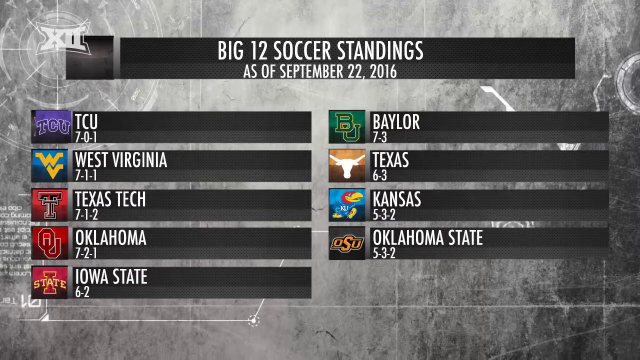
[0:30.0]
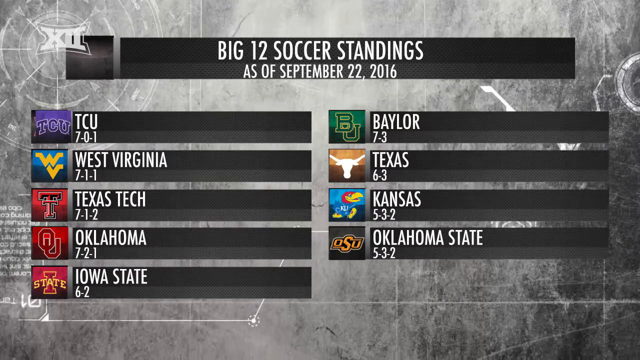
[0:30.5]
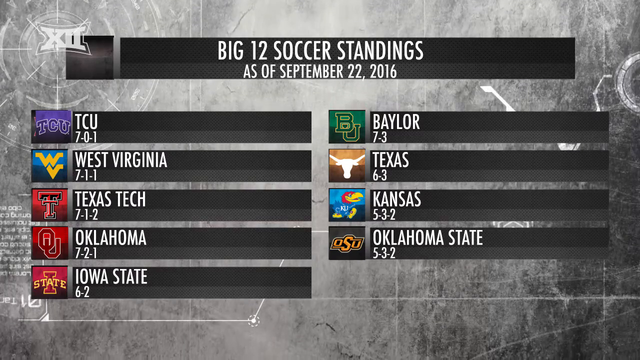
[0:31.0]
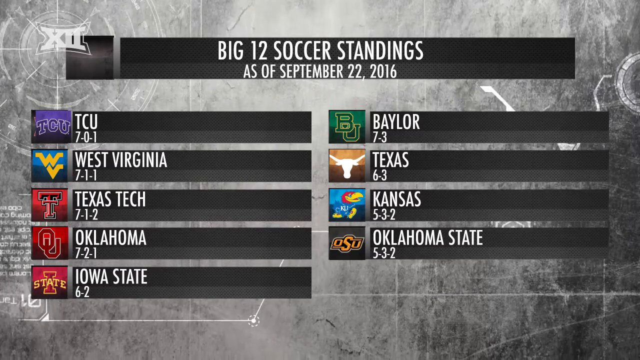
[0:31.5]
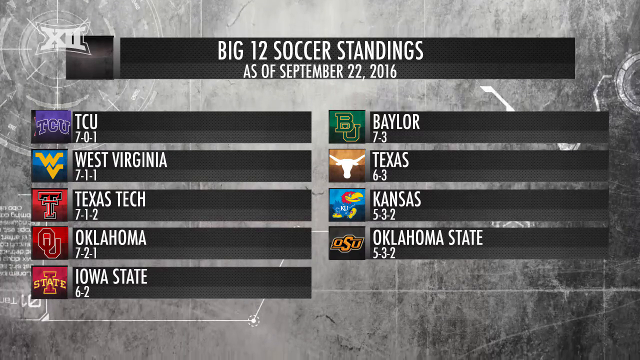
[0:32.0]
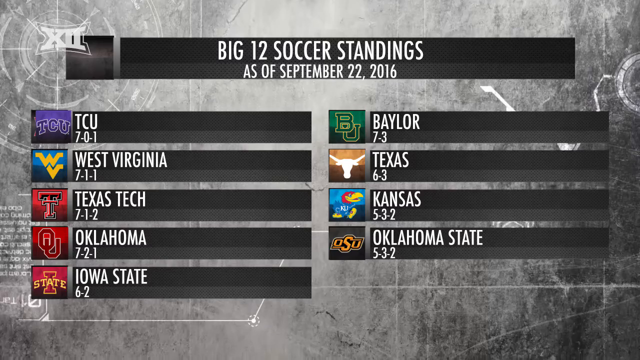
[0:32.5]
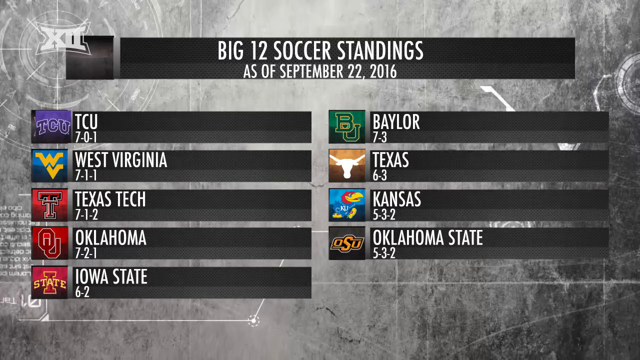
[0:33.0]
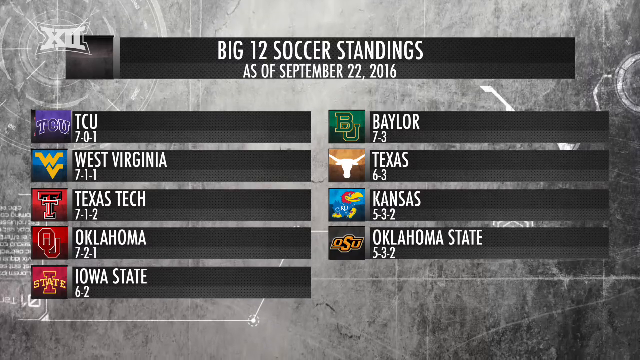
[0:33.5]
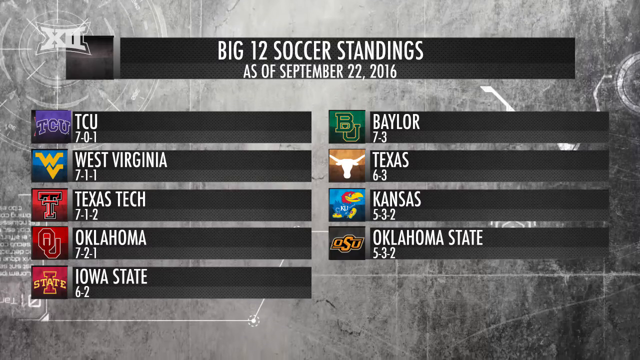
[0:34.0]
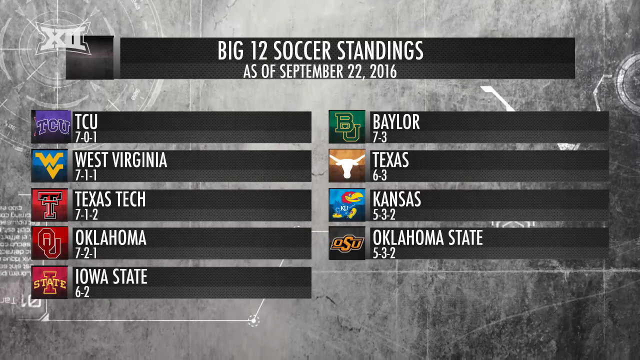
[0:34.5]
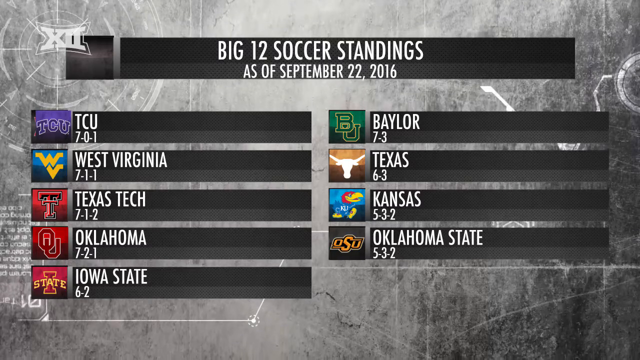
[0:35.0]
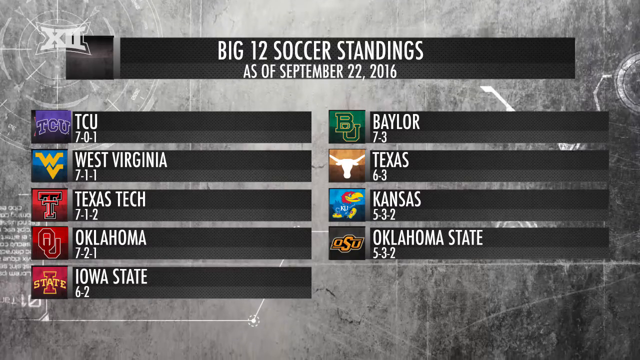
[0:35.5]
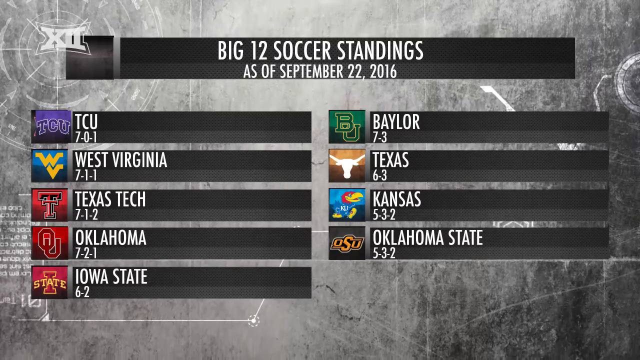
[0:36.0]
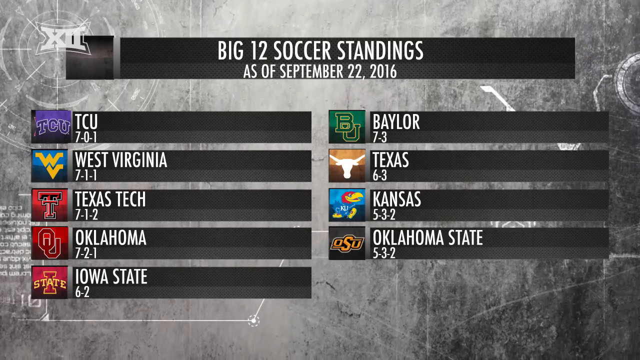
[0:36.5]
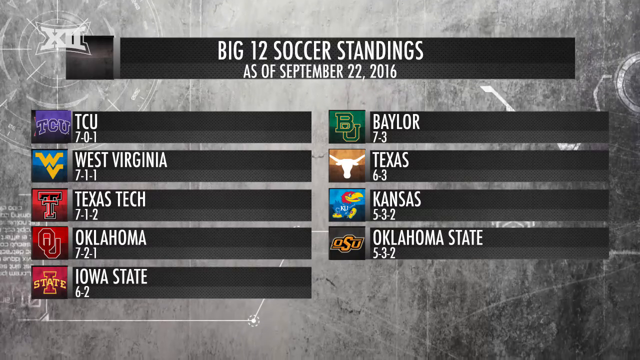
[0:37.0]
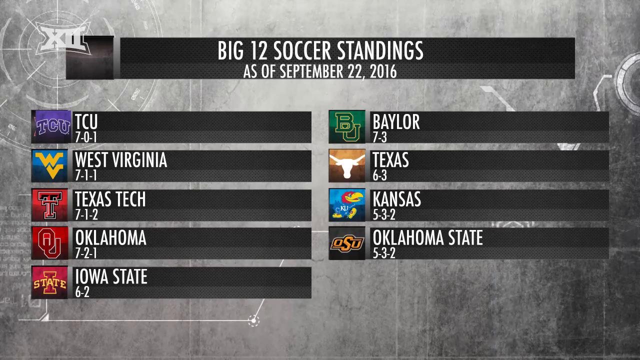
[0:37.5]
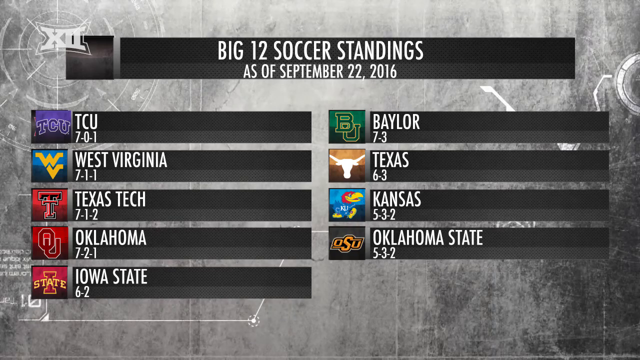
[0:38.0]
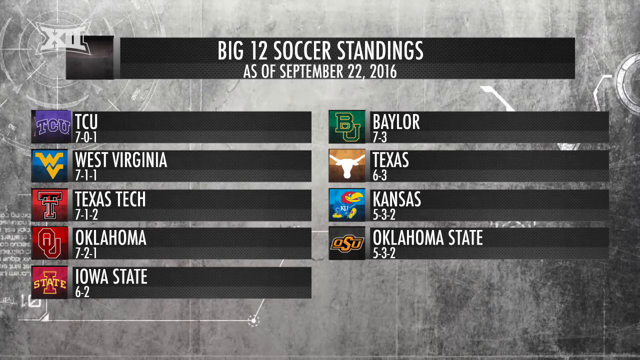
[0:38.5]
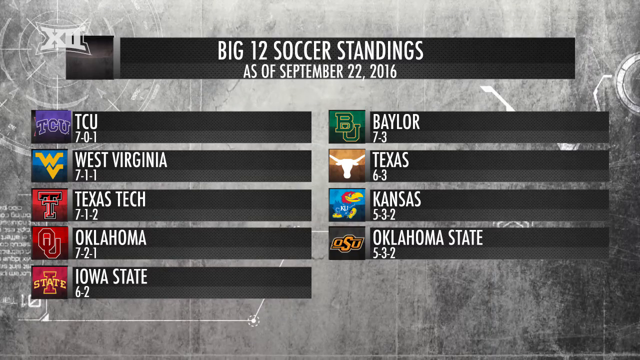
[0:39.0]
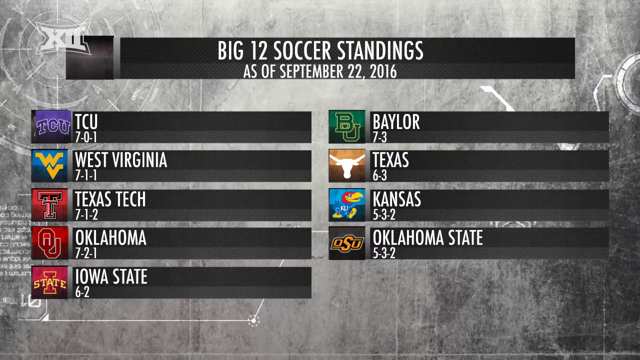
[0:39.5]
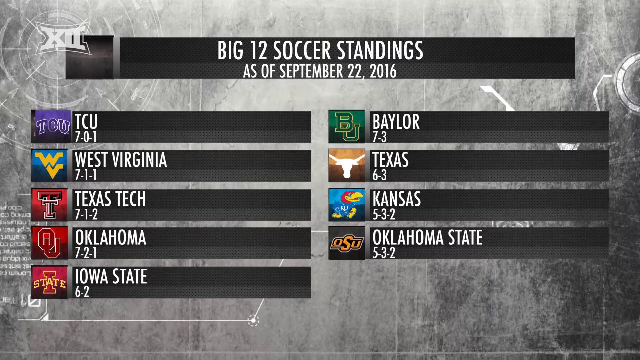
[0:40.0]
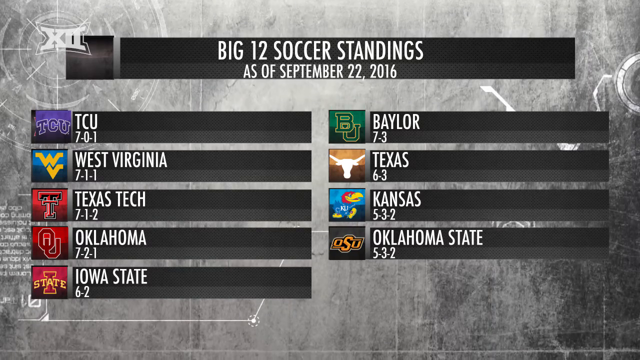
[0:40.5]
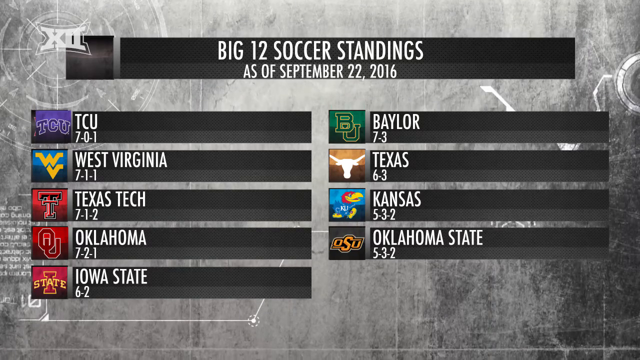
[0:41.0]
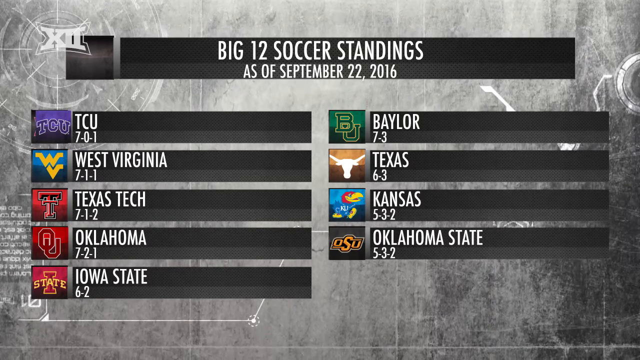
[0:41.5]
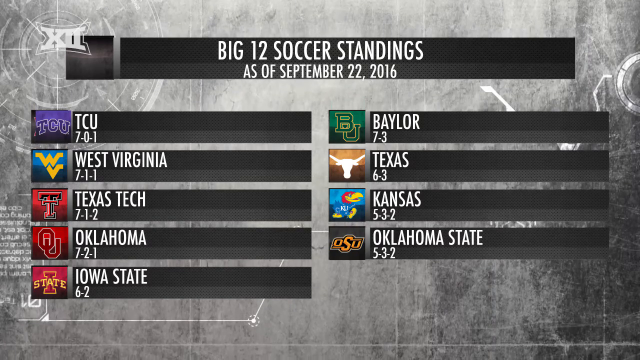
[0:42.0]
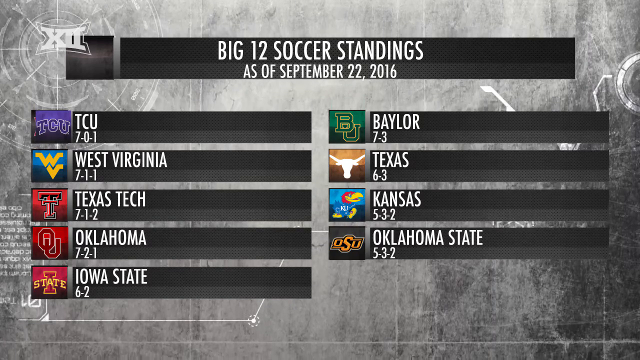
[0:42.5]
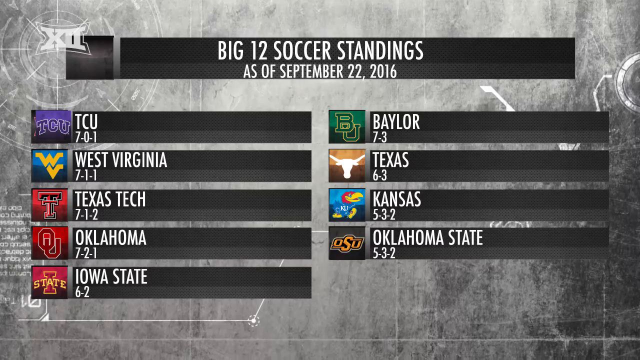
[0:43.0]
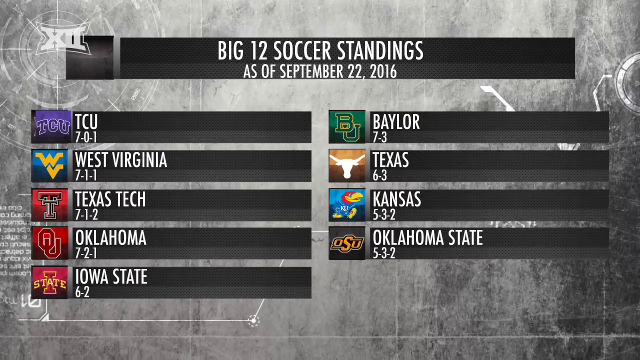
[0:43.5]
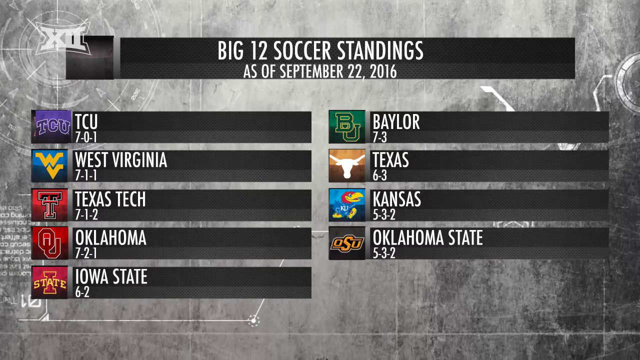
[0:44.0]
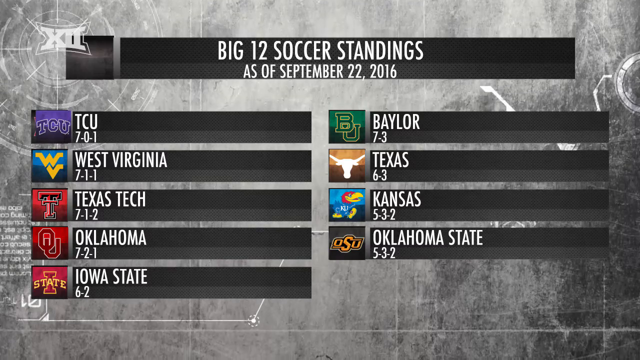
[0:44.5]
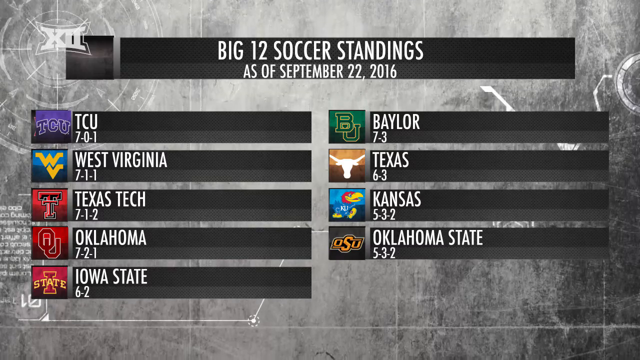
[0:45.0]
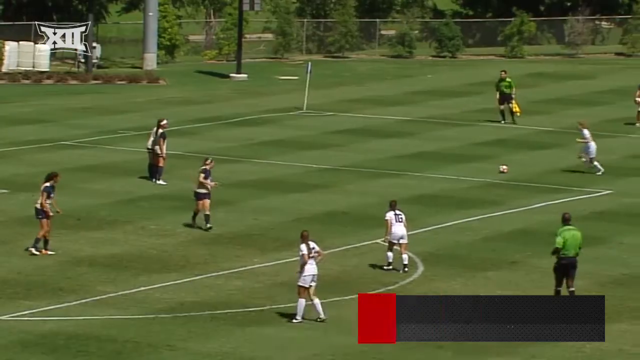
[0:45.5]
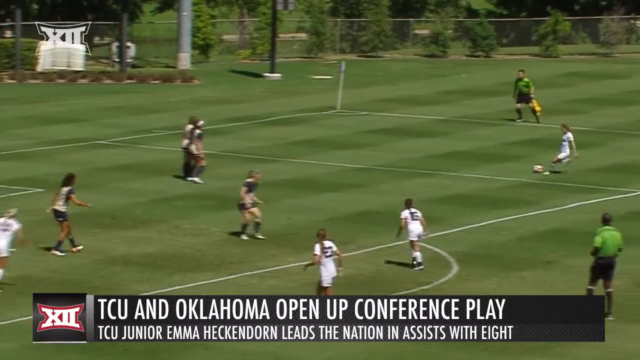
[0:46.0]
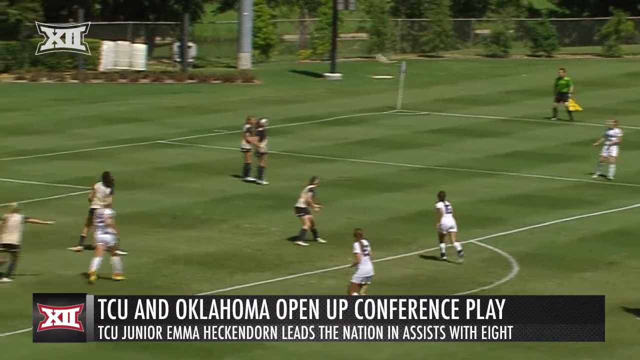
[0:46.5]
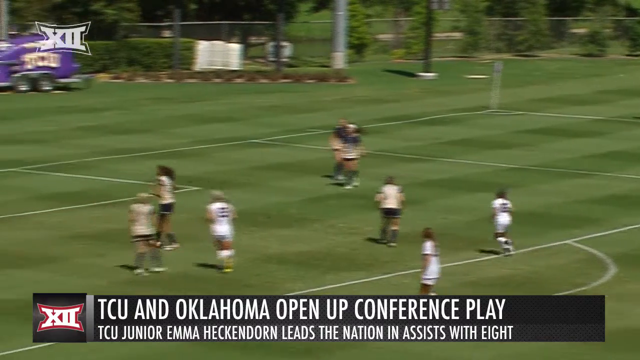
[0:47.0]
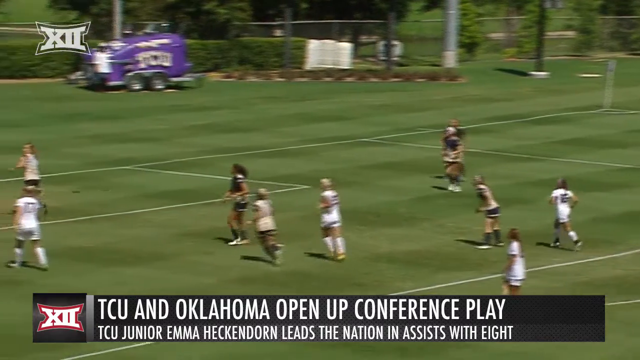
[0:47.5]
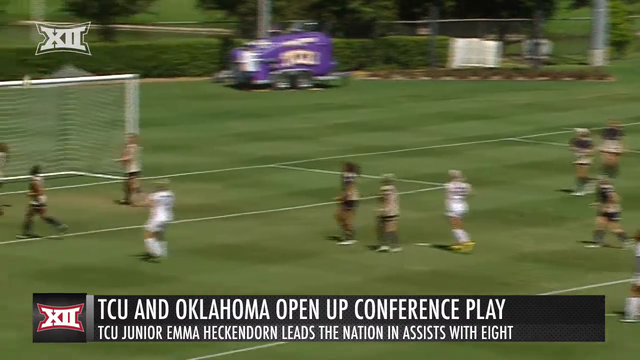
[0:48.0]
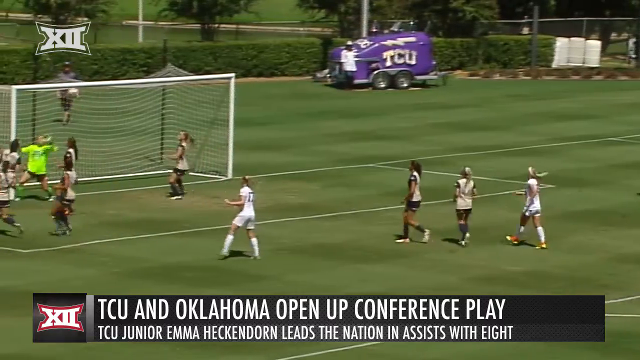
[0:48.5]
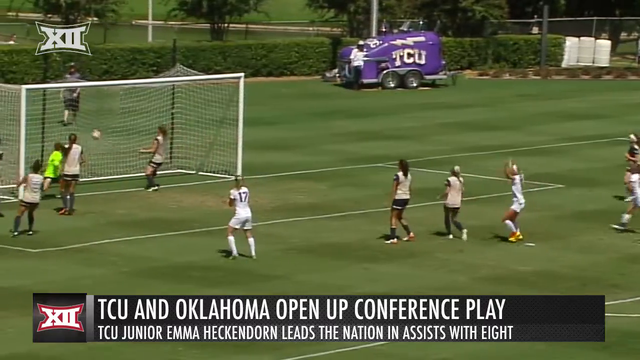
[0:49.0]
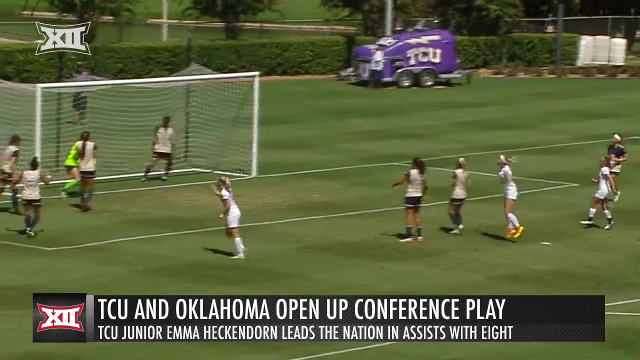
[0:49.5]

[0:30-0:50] The standings remain on screen in white font: "Big 12 soccer standards as of September 22nd 2016". On the left-hand side are TCU, then West Virginia, Texas Tech and Oklahoma underneath, and Iowa below that. On the right-hand side are Baylor, with Texas, Kansas and Oklahoma State listed underneath. The backdrop behind the standings looks like a playbook, like a coach's plans. Briefly, for a second or two at the very end, text reads "TCU Oklahoma open up conference play" as TCU plays that team in soccer outside.